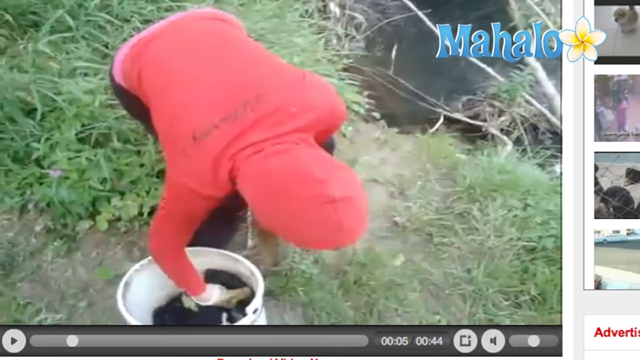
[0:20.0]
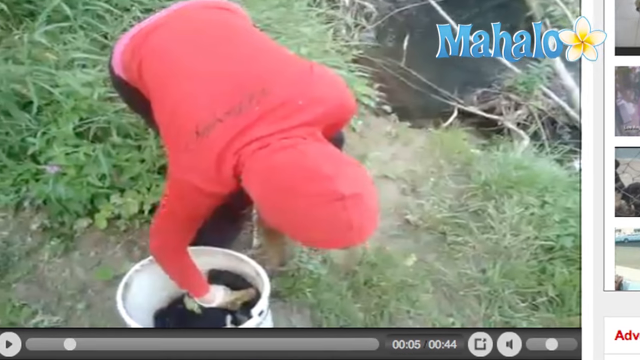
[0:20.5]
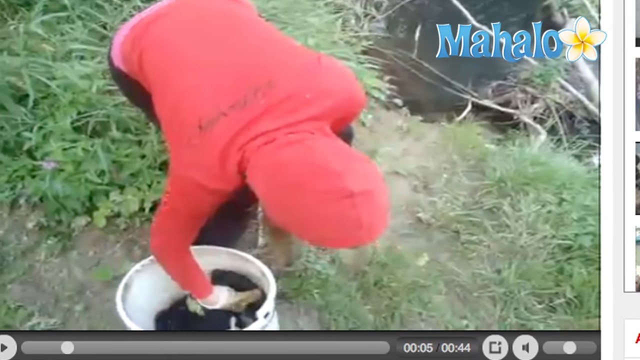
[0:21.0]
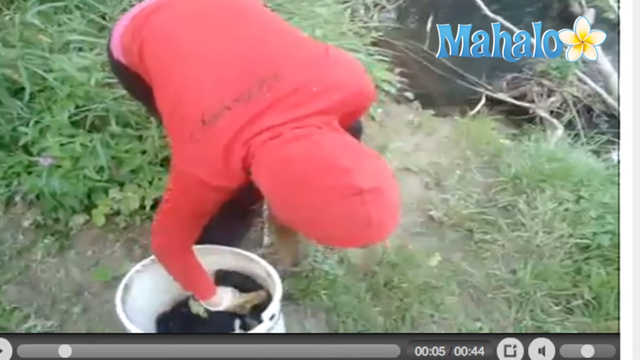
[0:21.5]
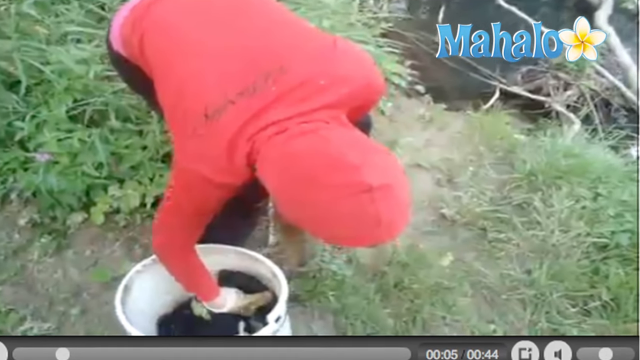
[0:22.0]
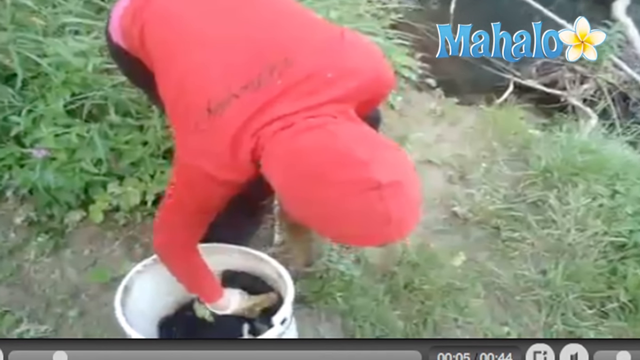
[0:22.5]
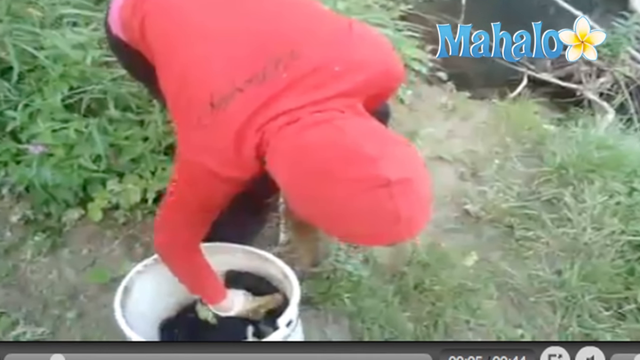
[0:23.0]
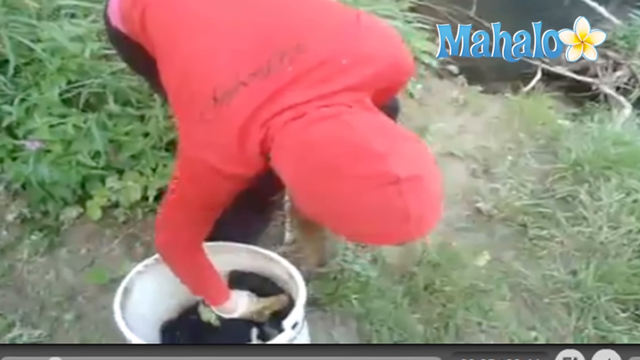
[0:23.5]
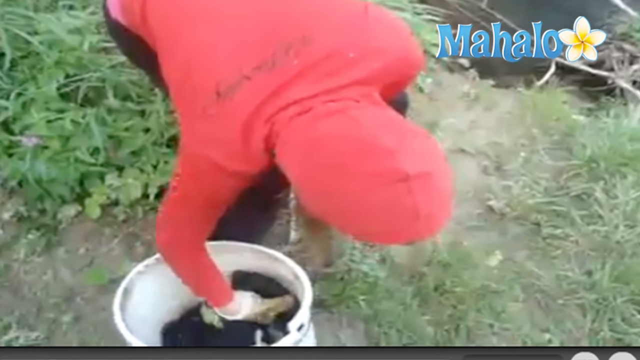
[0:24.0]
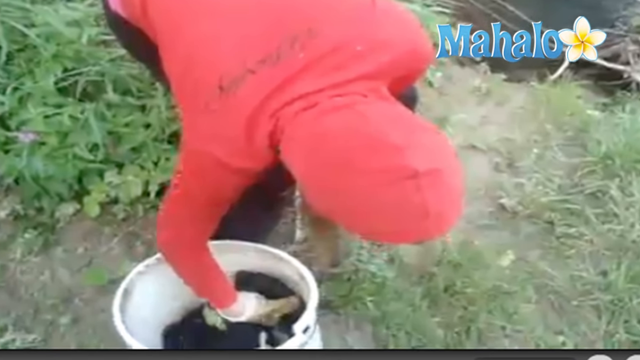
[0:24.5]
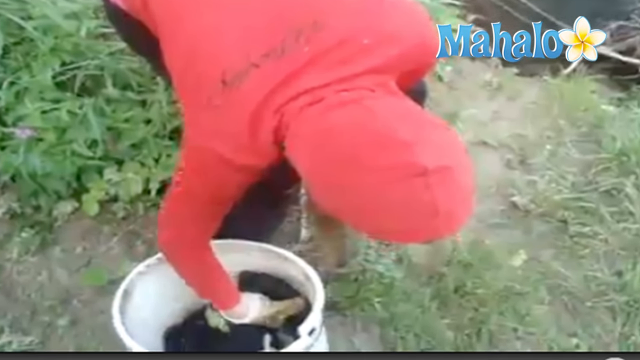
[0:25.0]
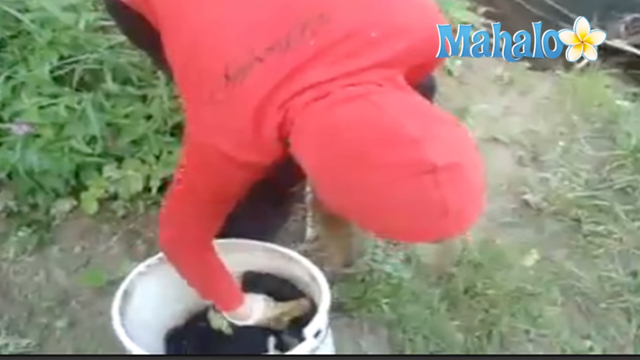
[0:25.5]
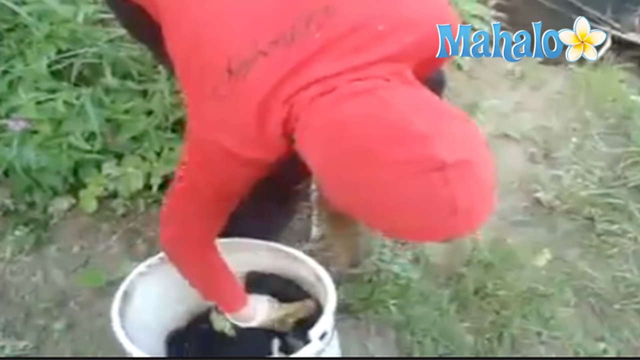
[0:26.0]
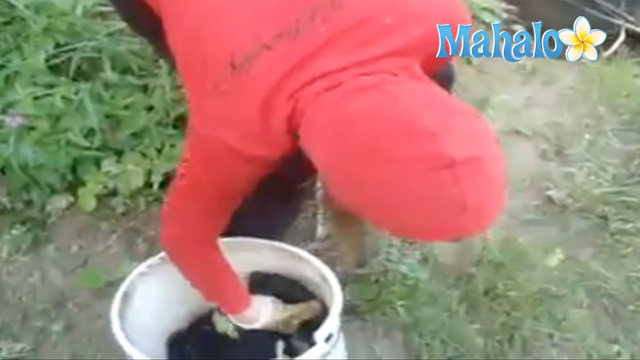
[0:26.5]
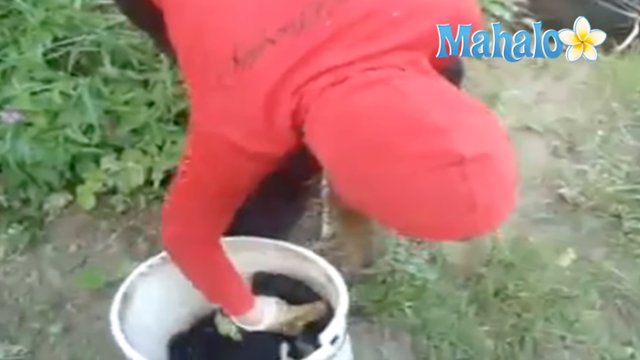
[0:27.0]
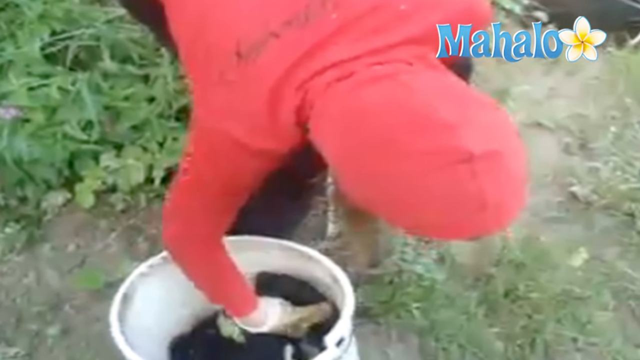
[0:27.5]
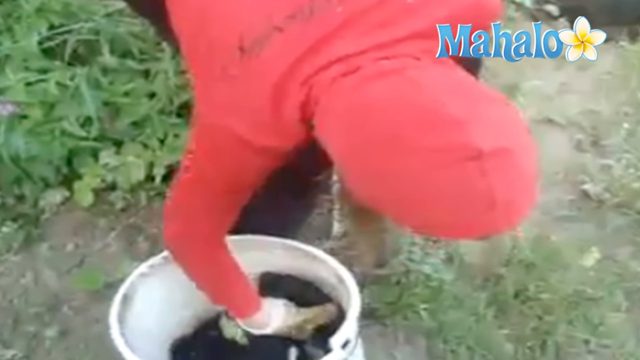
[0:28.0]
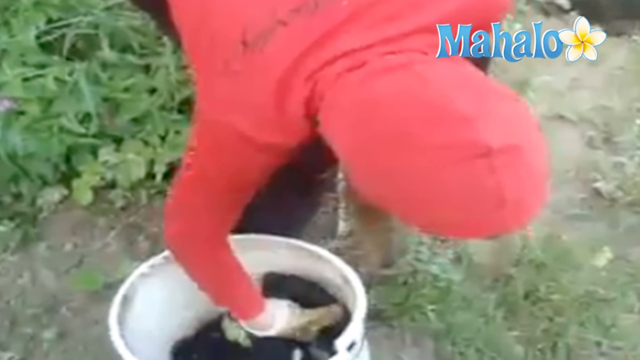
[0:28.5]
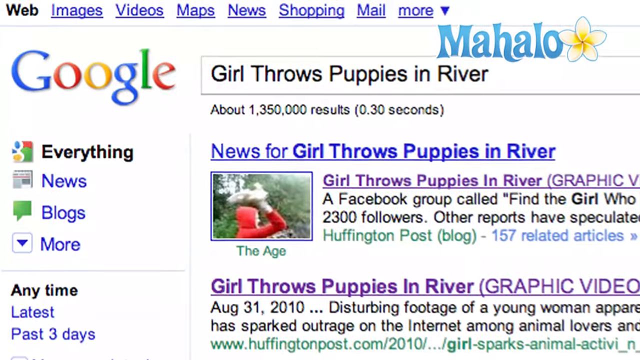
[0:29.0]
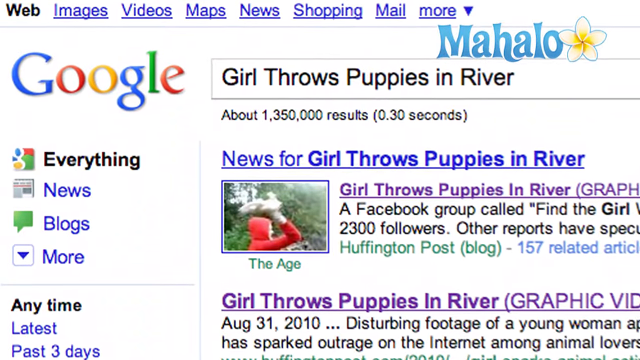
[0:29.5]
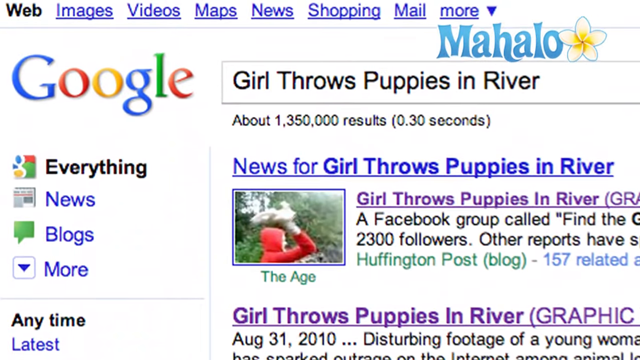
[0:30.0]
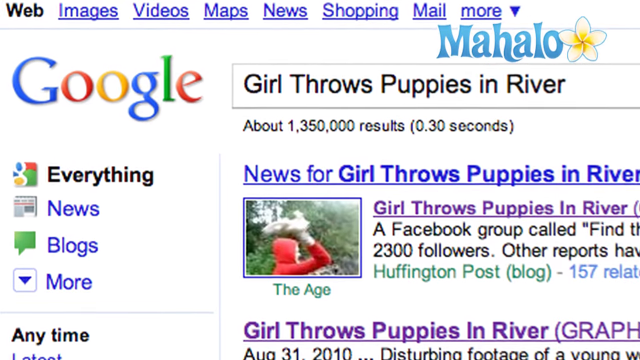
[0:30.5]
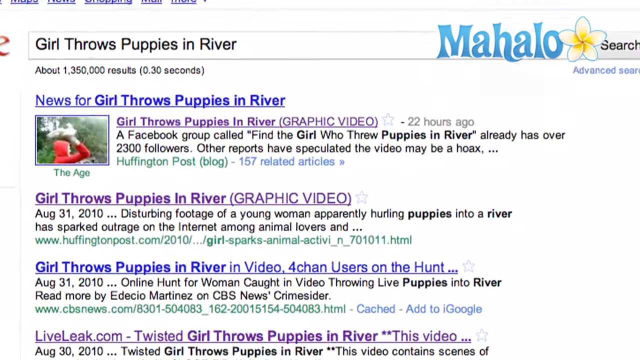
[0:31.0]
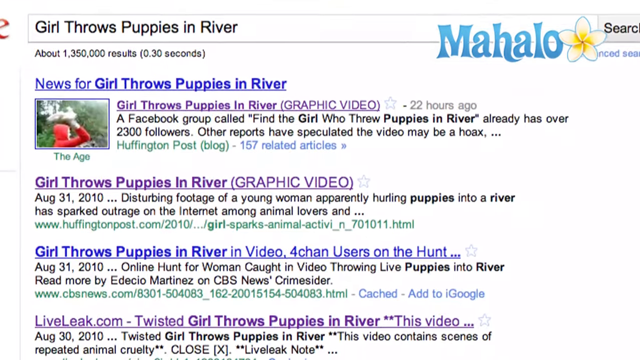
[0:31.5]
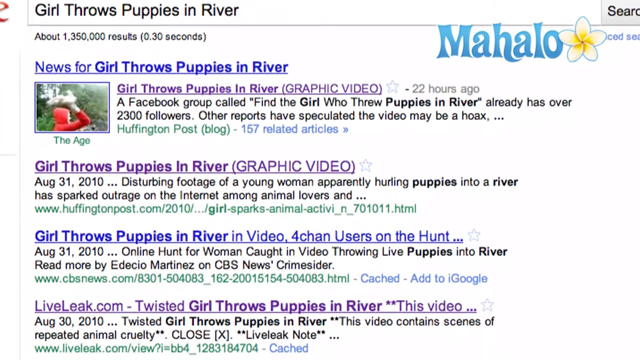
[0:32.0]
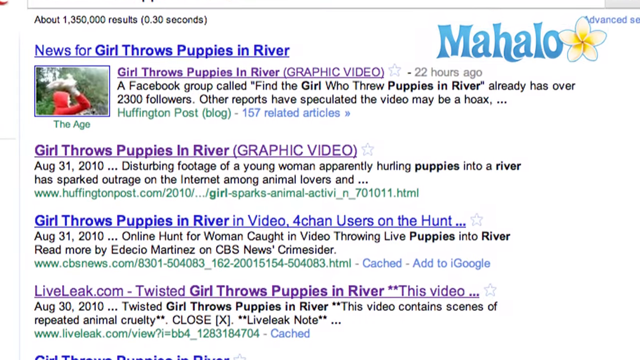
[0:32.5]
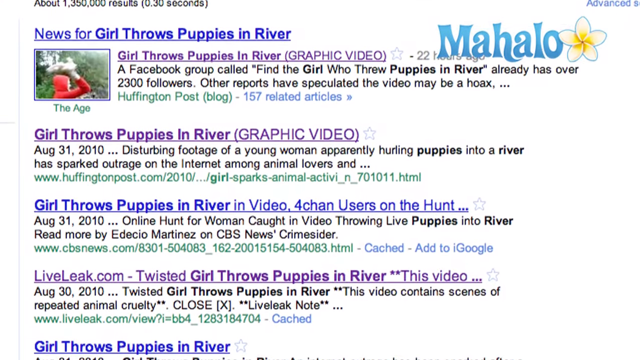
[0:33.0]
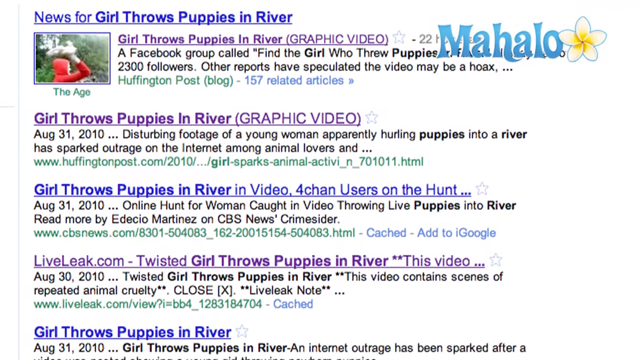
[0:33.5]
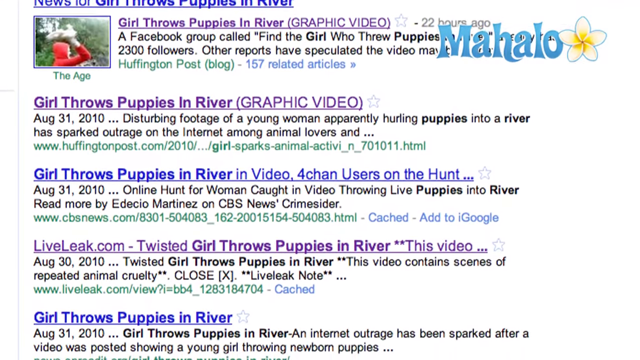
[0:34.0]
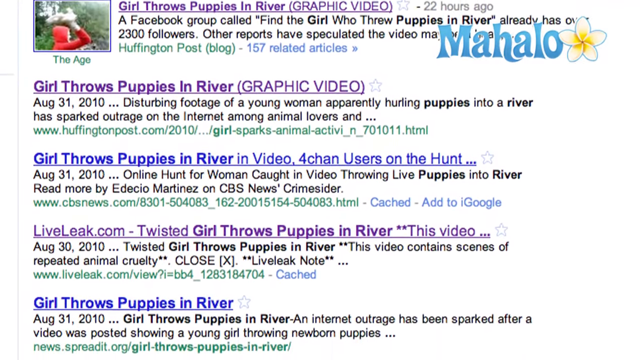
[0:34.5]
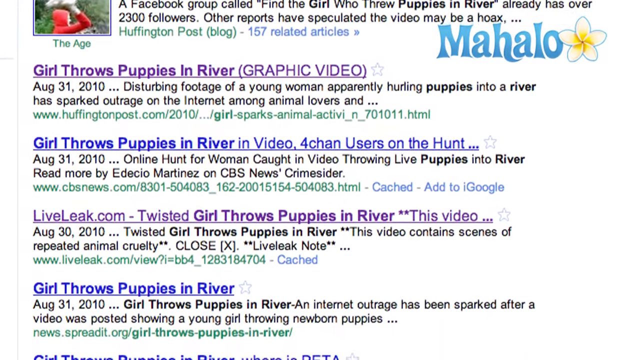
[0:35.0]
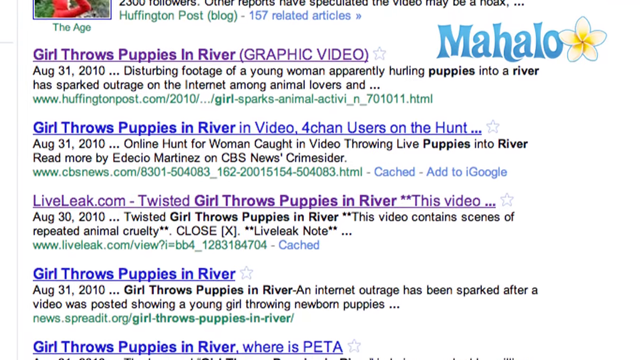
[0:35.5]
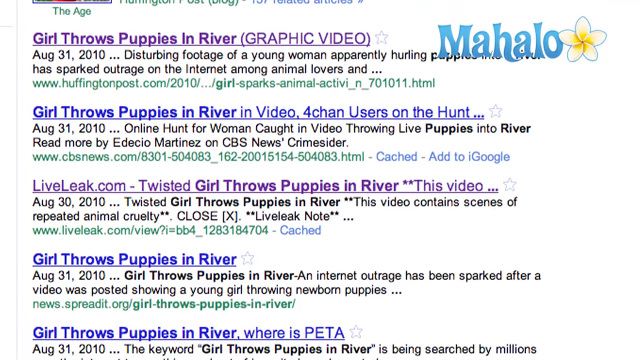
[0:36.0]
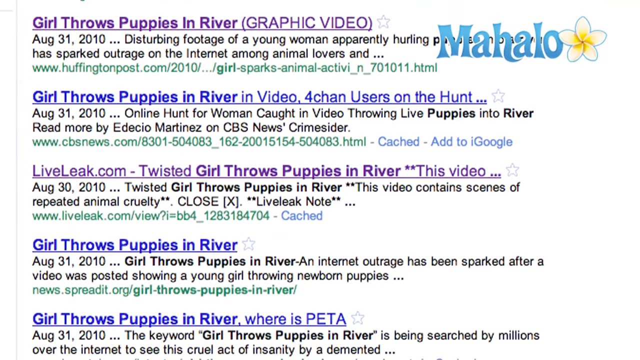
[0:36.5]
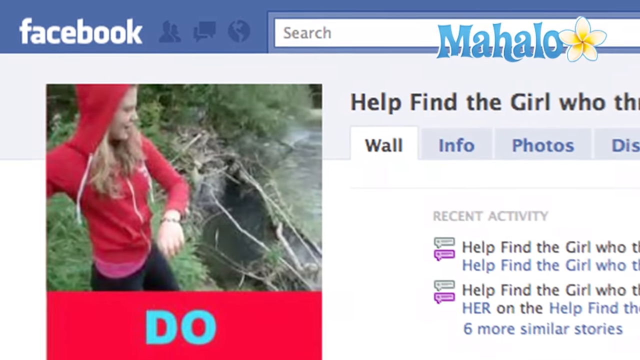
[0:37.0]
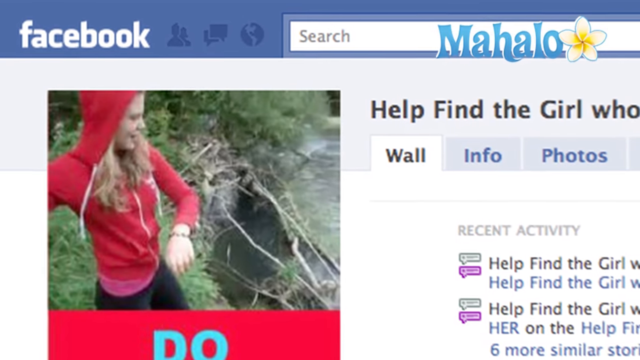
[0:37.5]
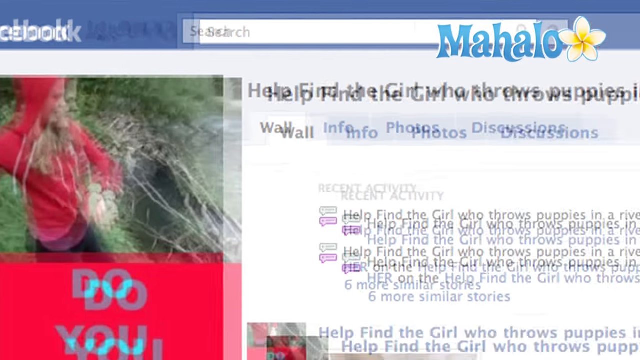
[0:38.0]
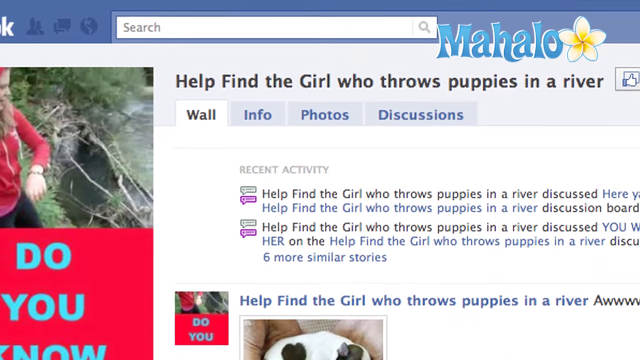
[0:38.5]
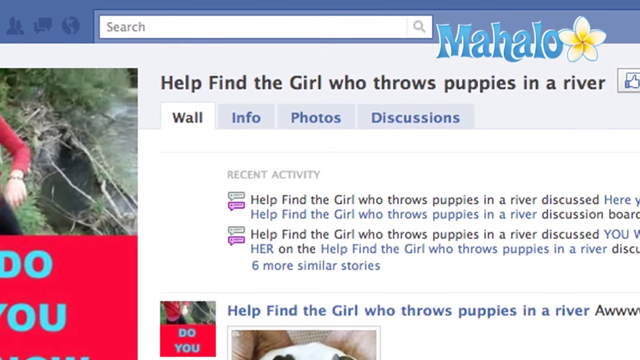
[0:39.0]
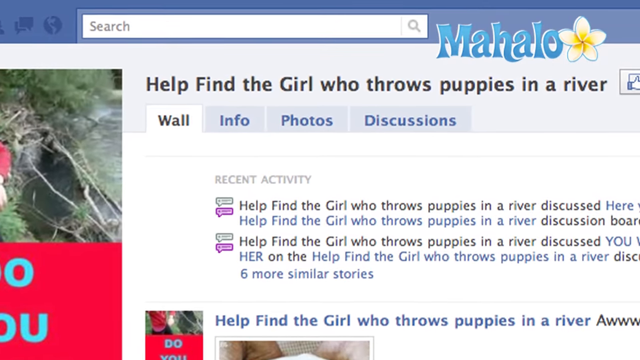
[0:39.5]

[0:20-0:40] The shot zooms in on the girl to show her hand in the water pulling something out to throw it. The scene then changes to Google, showing news headlines such as "girl throws puppies in river." Text reads "A Facebook group called Find the Girl Who Threw Puppies in River already has over 2.3 followers" and "Other reports have speculated the video may be a hoax." The date 31 August 2010 is shown, along with the headline "Online hunt for the woman caught in the video throwing live puppies into the river" and a reference to CBS News. A post made to find the girl shows her picture and the question "do you know how to find the girl who throws puppies in the river?"